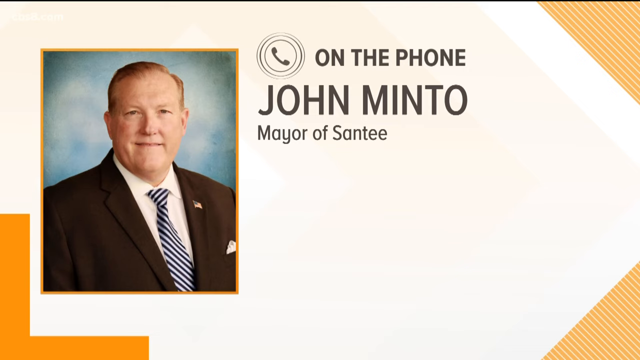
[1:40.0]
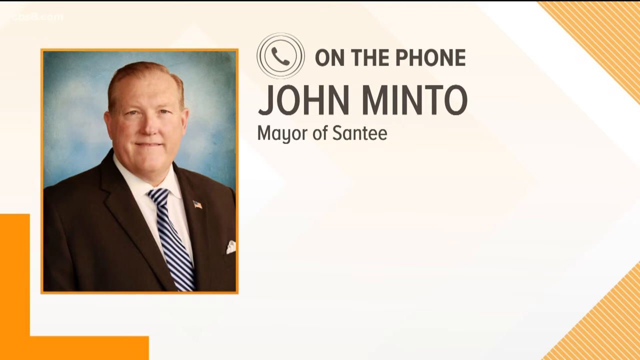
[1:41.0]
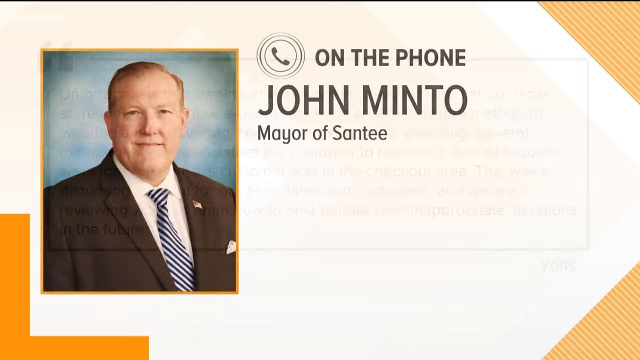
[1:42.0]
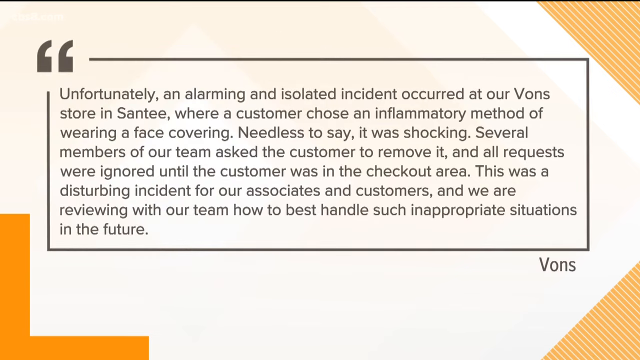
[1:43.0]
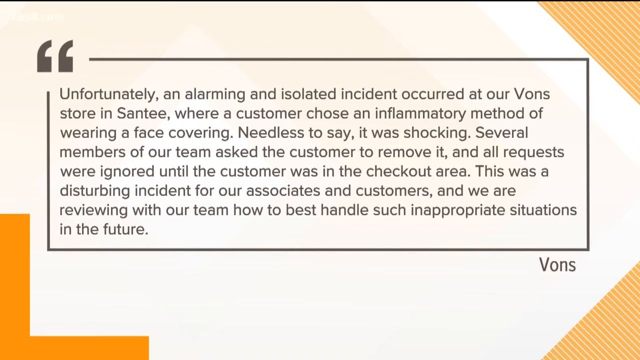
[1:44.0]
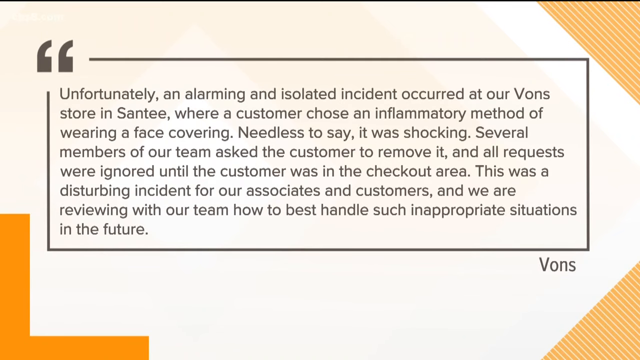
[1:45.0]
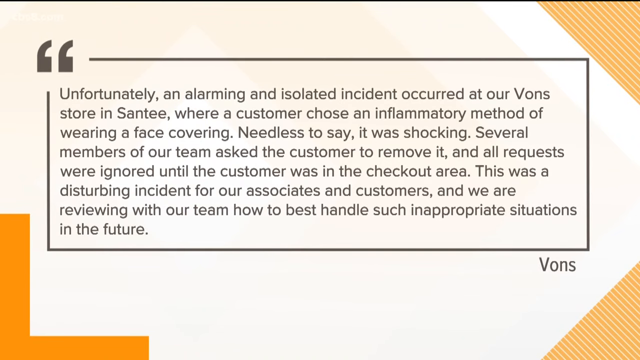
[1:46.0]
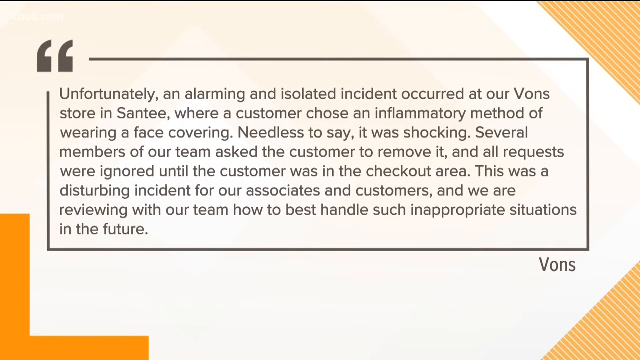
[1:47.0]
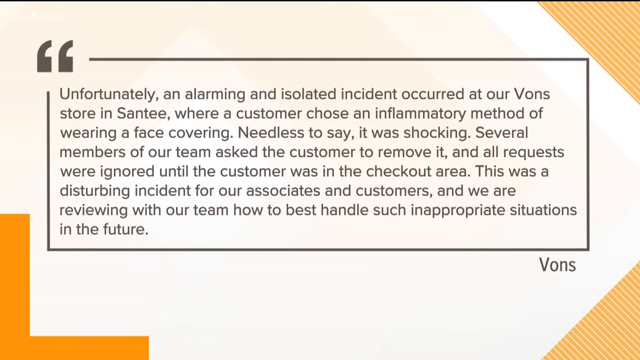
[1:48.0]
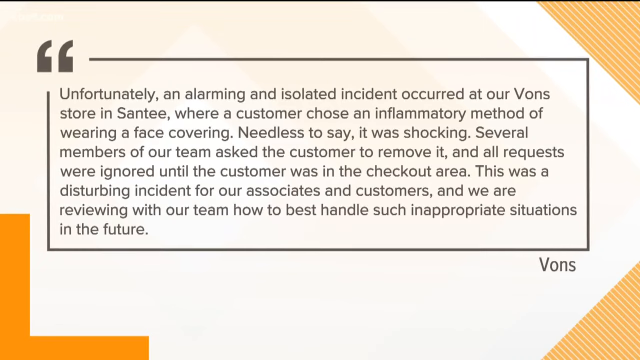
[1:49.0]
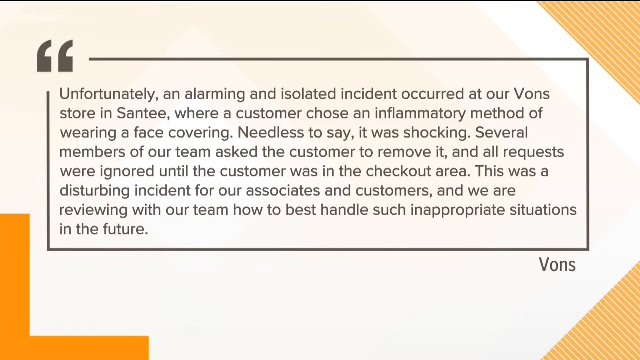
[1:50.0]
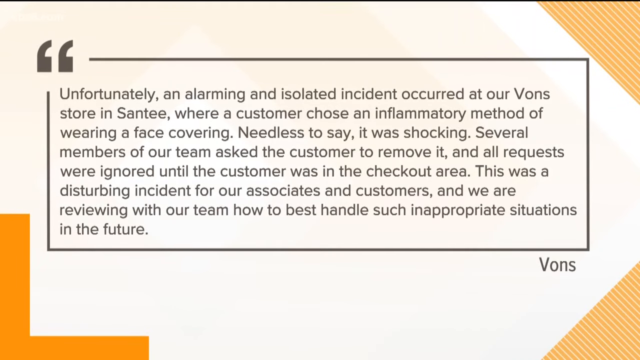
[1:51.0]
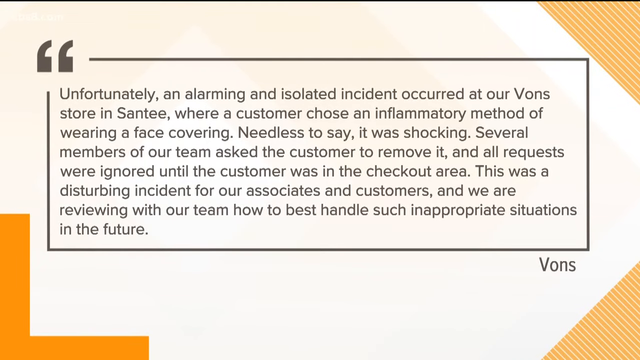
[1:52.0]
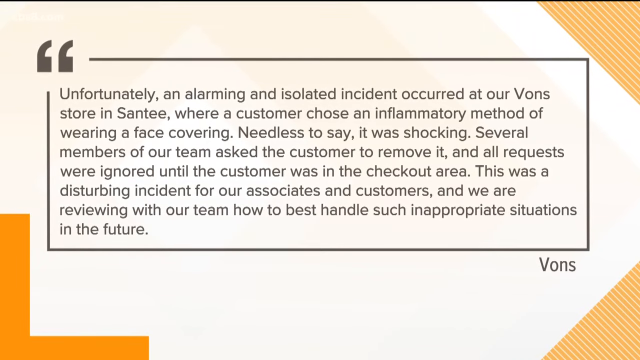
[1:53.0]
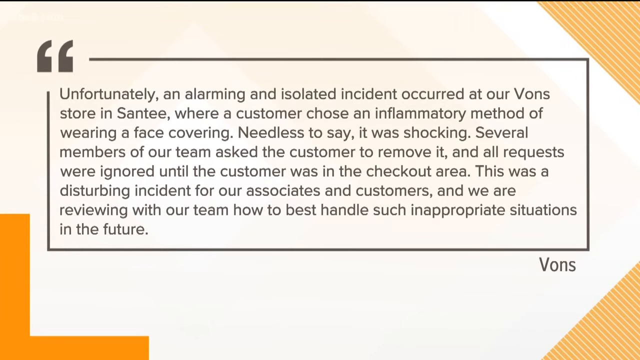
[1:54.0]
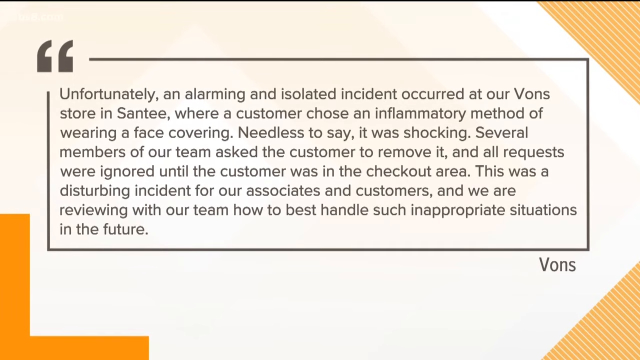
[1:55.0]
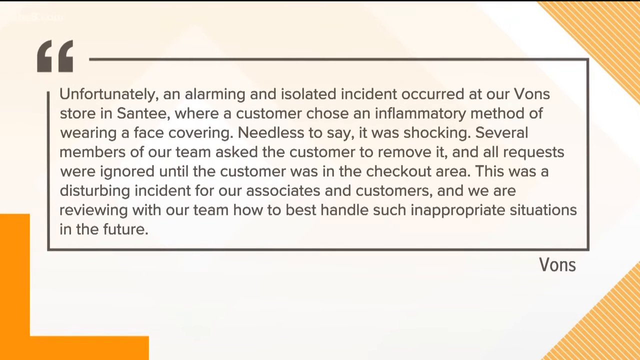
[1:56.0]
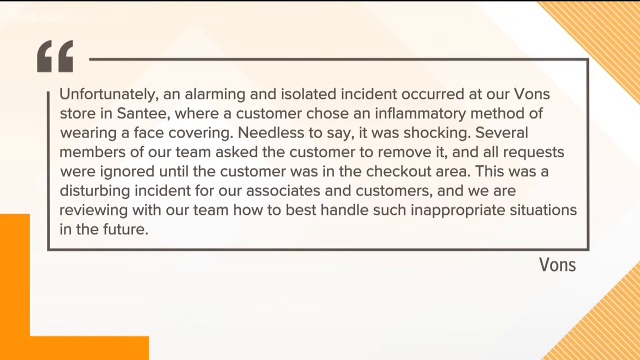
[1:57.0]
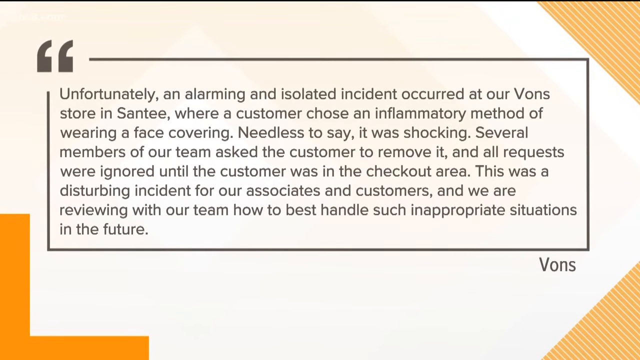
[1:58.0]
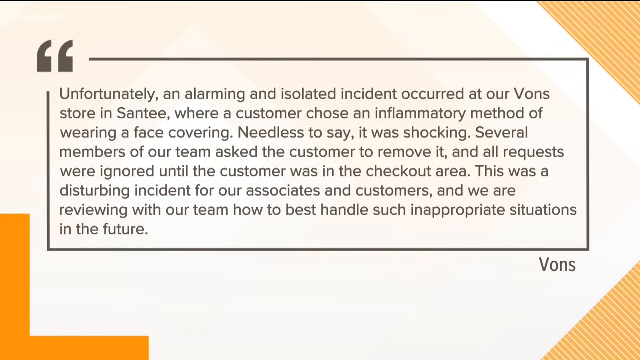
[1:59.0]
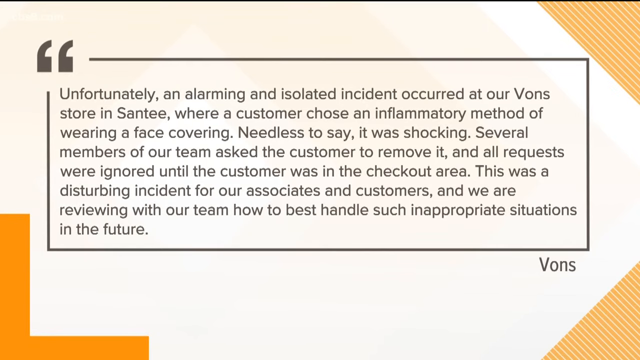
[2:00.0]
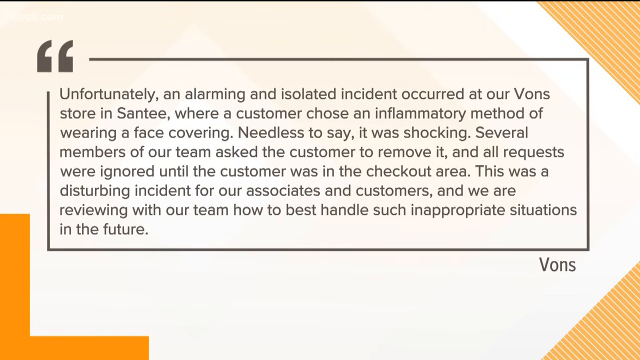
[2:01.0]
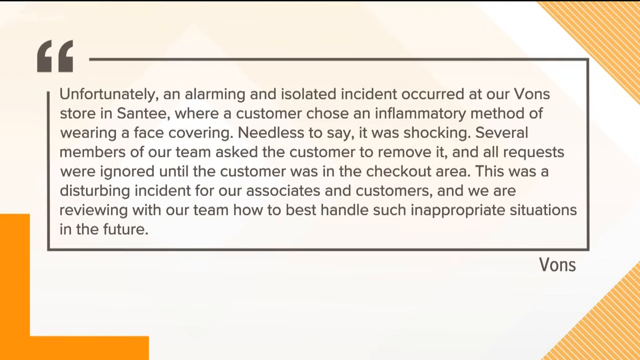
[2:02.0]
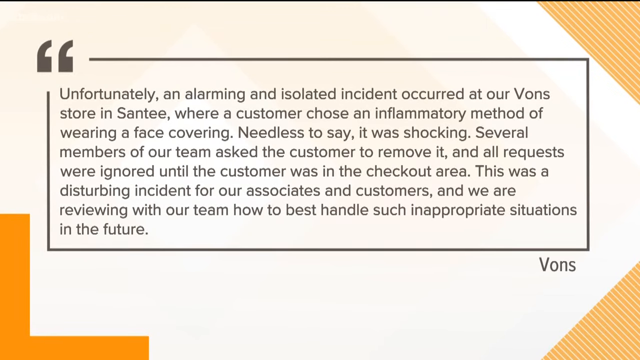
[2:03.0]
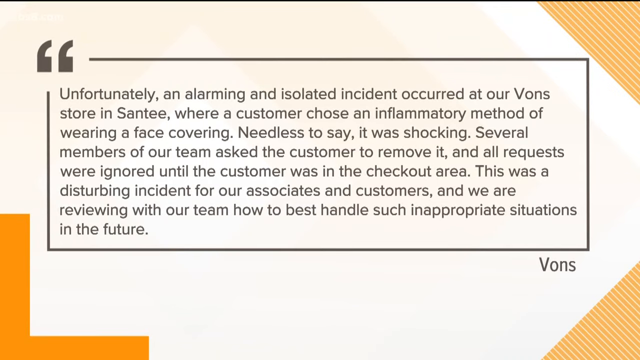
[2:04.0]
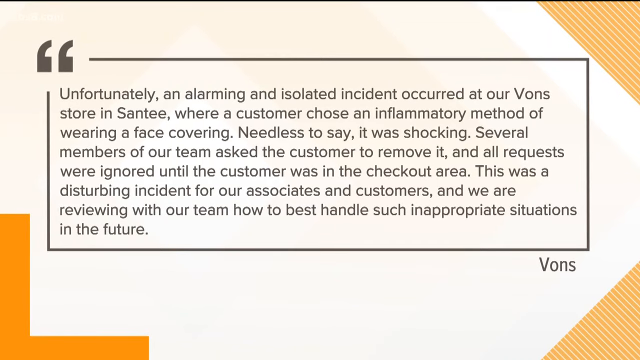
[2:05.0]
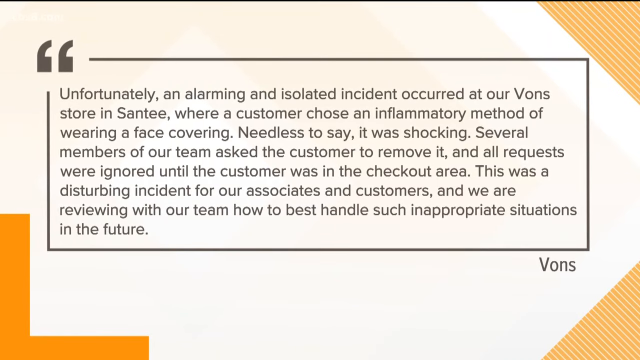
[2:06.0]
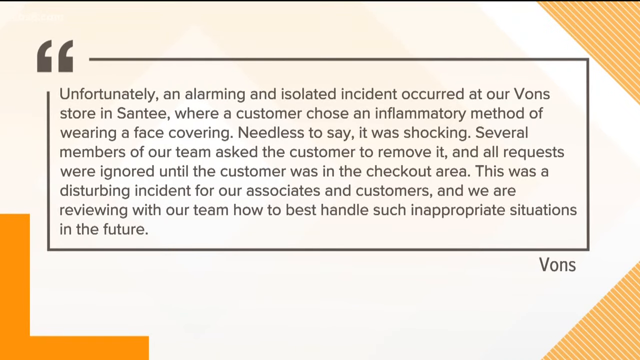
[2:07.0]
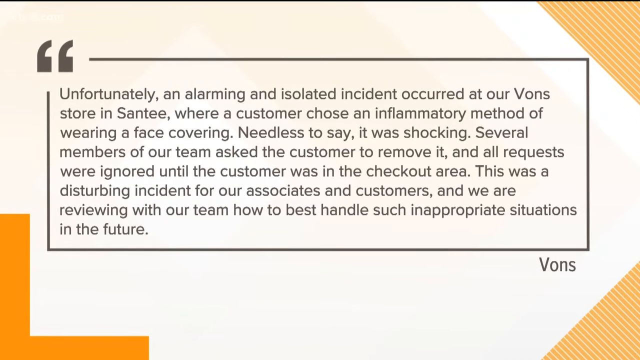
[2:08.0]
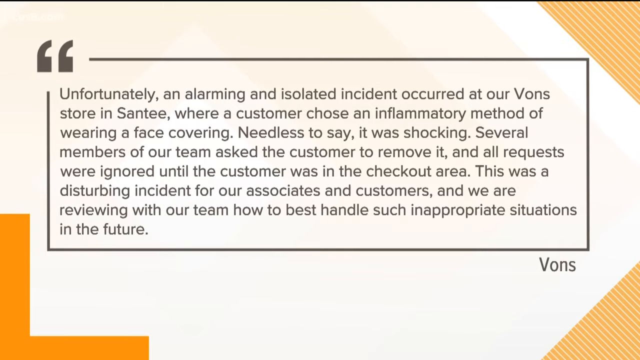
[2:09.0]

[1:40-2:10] On the left side is an older white man wearing a suit jacket with an American flag lapel pin, a white shirt and a blue and white striped tie. On the right side is a circle with a phone icon in it, and the text reads "John Minto, Mayor of Santee". The rest of the segment shows the quote he gave concerning the incident: "unfortunately, an alarming and isolated incident occurred at our Vaughn store in Santee where a customer chose an inflammatory method of wearing a face covering. Needless to say, it was shocking. Several members of our team asked the customer to remove it, and all requests were ignored until the customer was in the checkout area. This was a disturbing incident for our associates and customers, and we are reviewing with our team how to best handle such inappropriate situations in the future." The quote is inside a box with a quote icon at the top left, and "Vaughn's" appears at the bottom right.